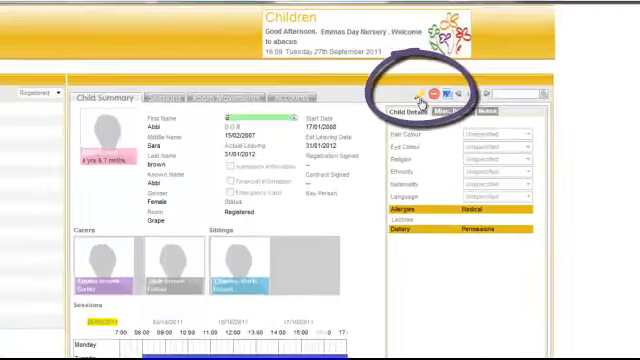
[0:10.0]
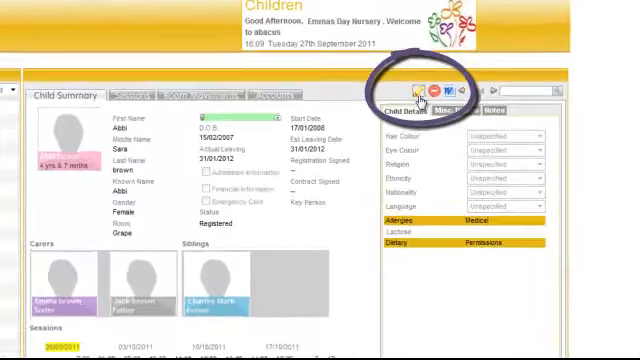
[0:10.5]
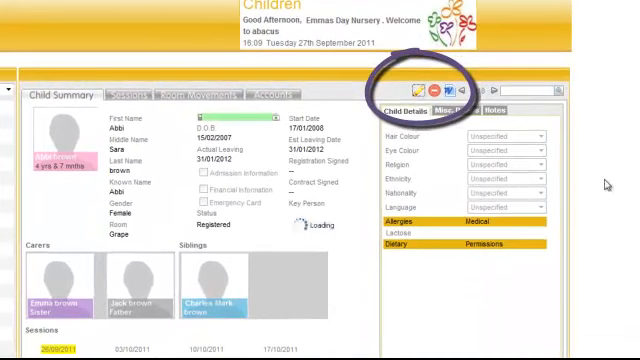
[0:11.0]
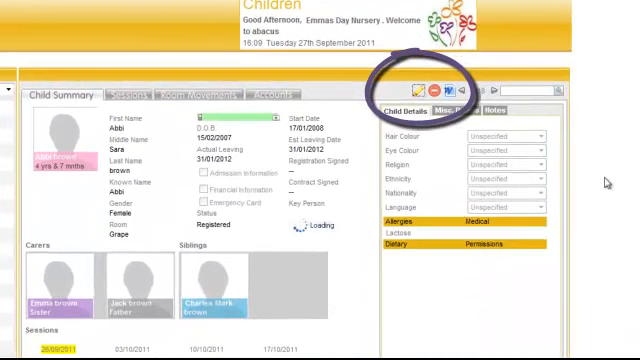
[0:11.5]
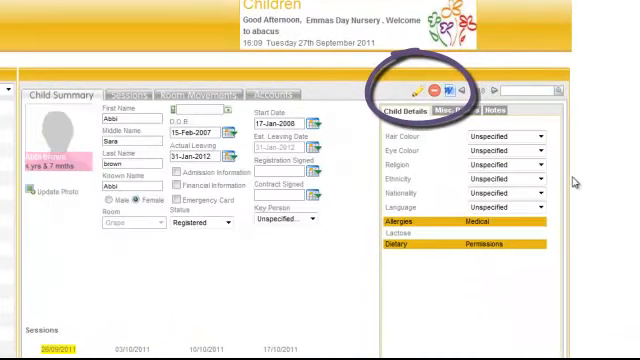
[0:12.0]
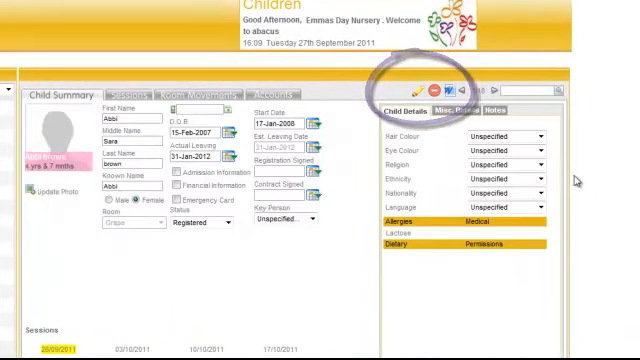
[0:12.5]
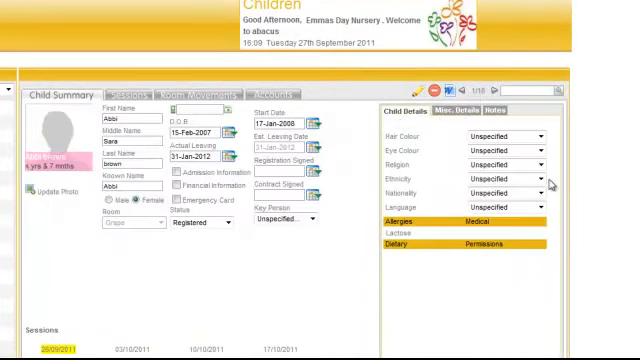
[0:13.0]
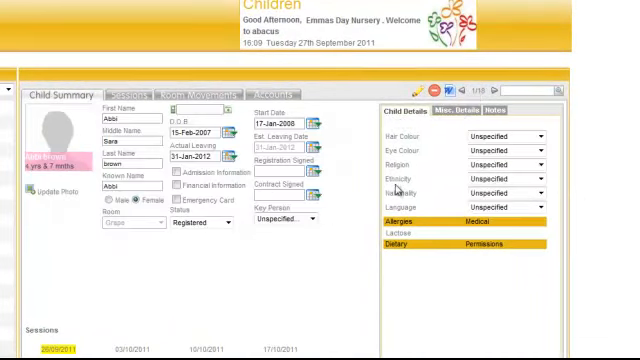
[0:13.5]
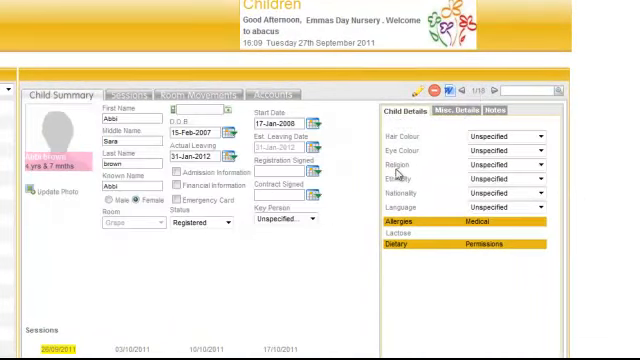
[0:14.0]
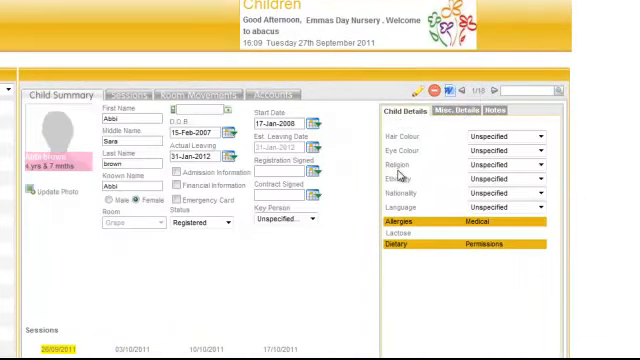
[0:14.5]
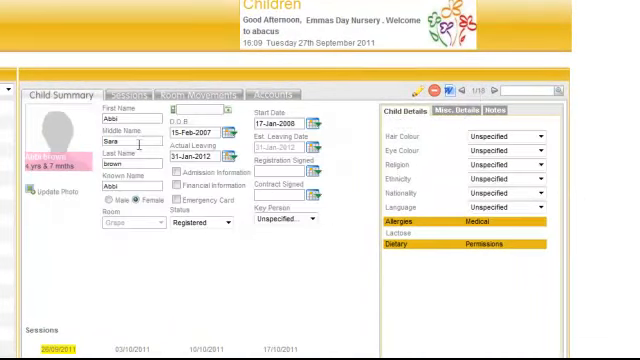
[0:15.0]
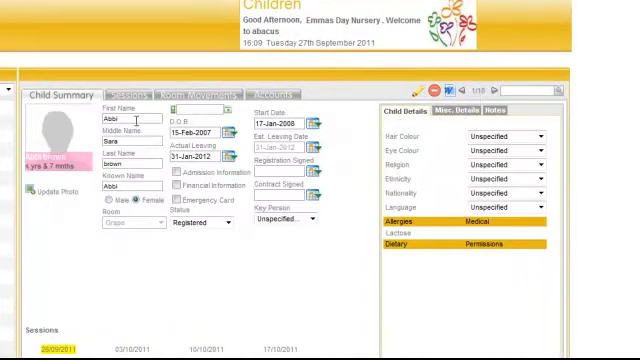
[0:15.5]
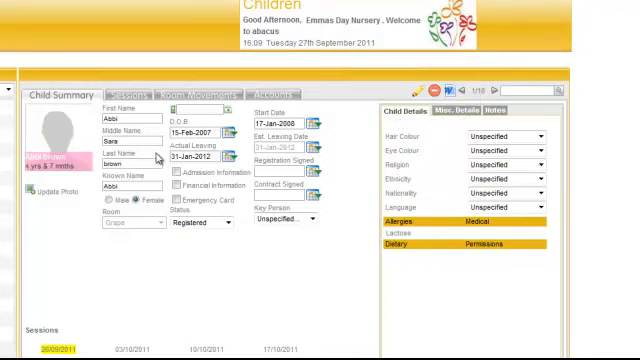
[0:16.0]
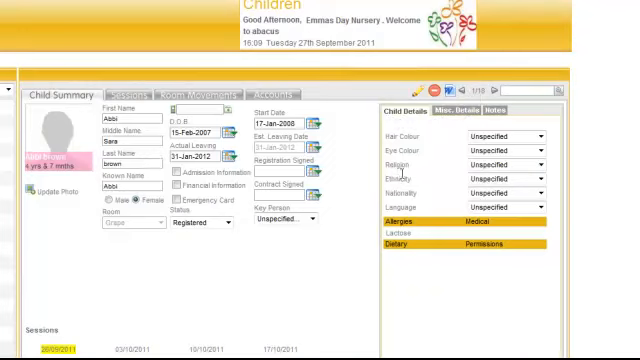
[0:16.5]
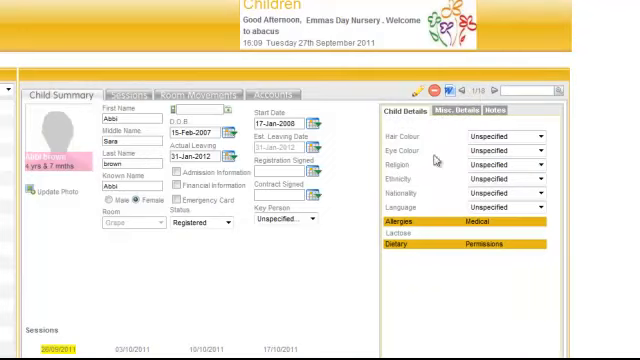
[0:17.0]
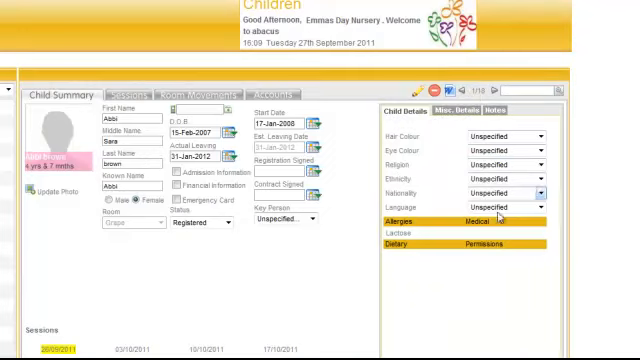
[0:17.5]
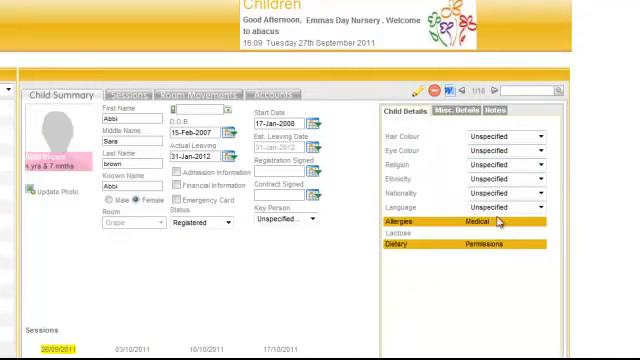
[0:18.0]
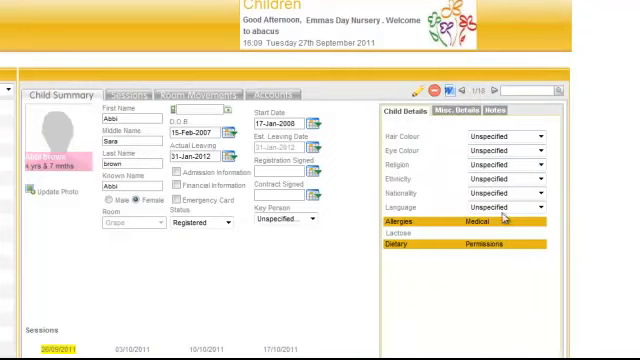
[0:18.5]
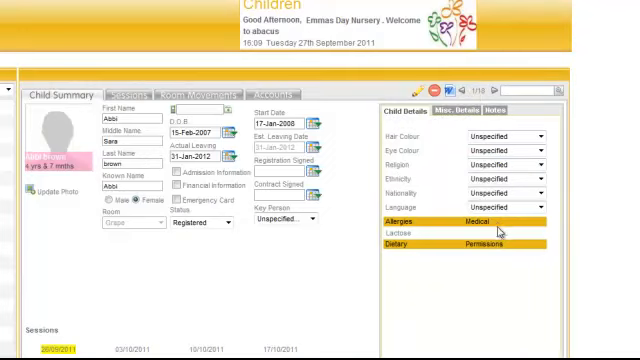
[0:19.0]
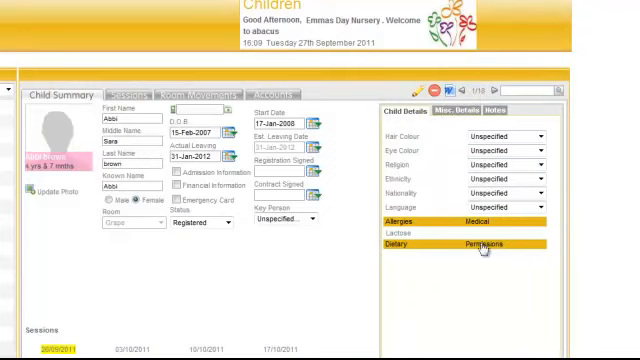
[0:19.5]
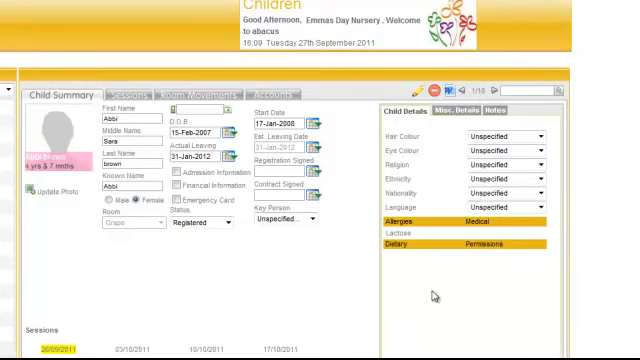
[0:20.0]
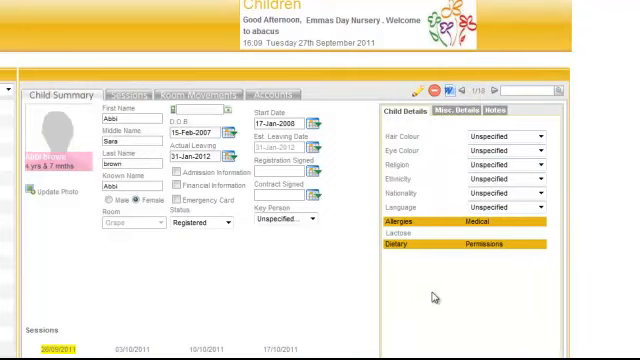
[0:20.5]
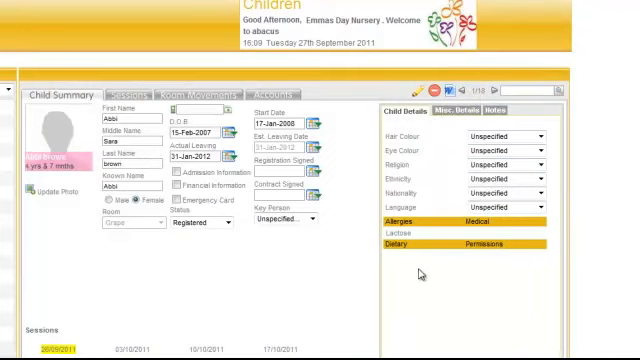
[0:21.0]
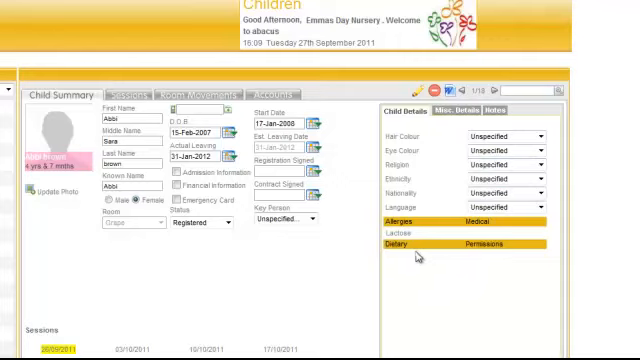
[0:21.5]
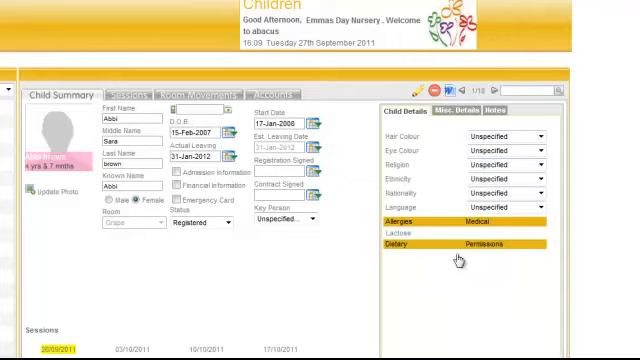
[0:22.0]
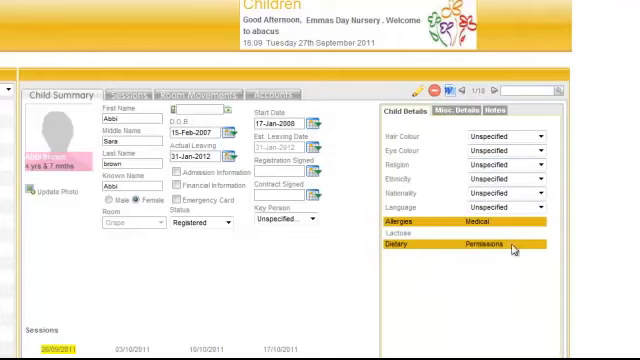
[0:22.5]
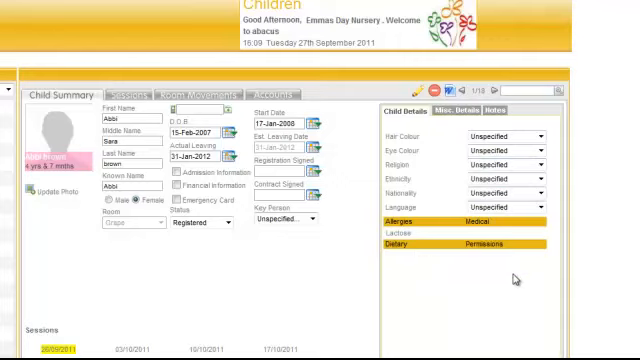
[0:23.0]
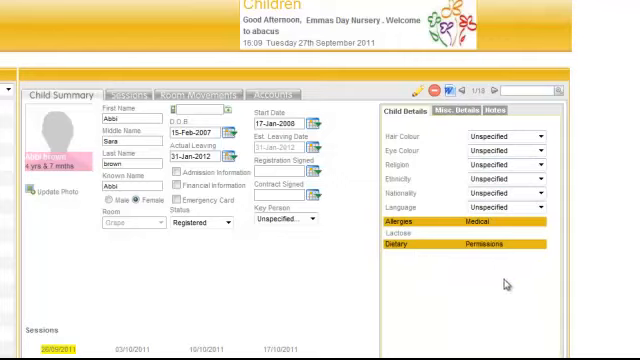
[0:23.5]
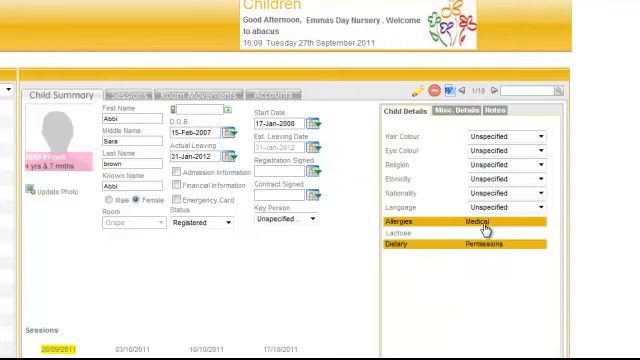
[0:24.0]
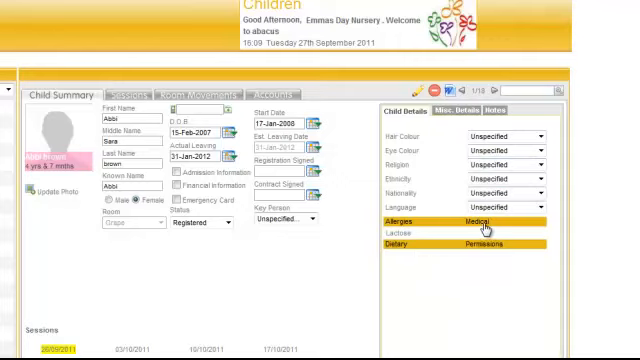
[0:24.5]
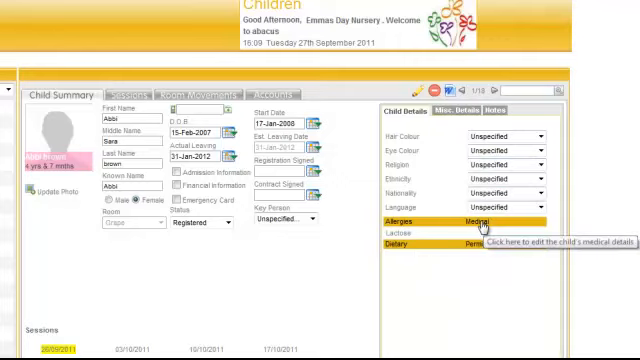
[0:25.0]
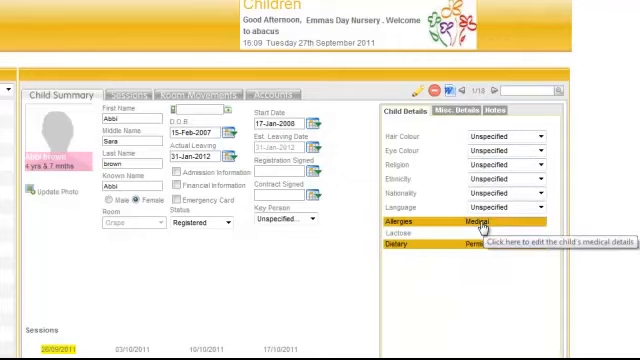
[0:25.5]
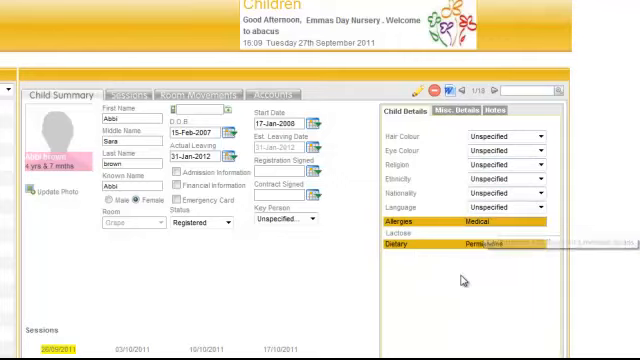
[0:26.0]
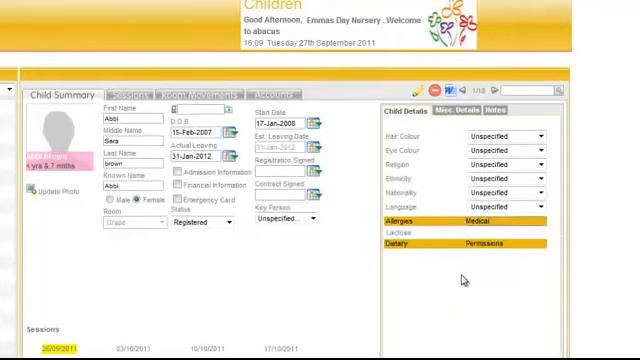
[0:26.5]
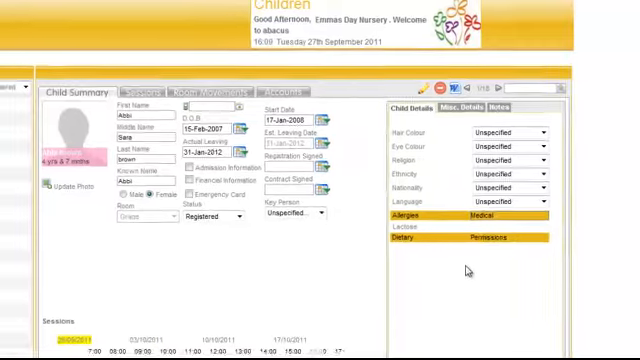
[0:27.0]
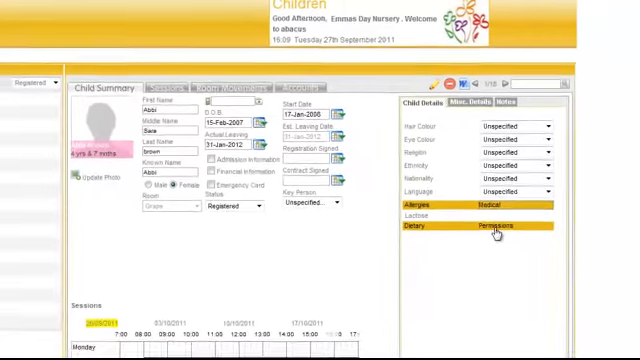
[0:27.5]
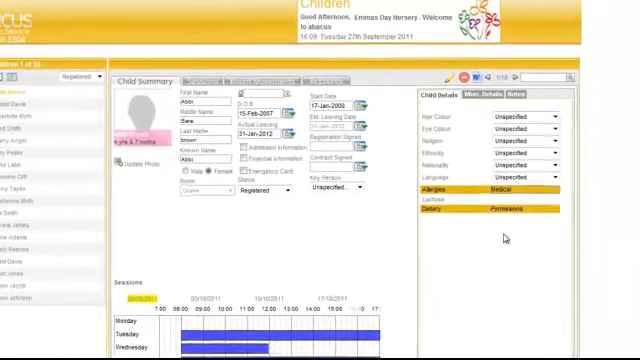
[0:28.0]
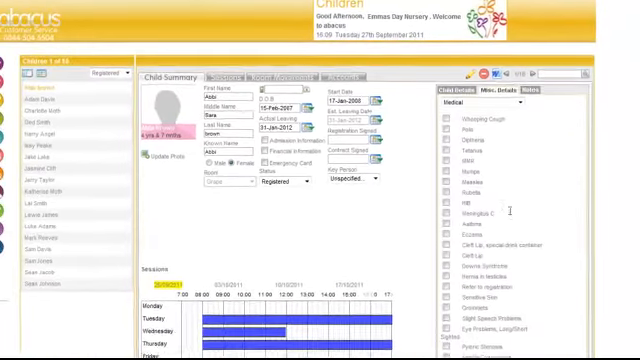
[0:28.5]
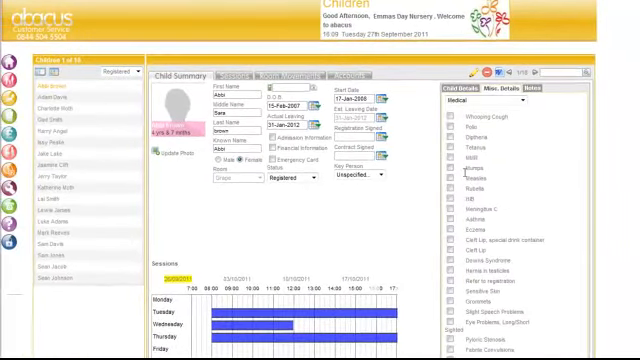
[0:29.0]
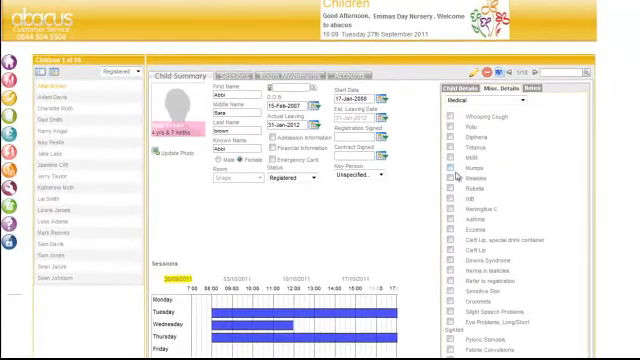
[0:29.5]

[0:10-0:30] The woman leading the tutorial continues working on the site. The page shows the child's name and surname, date of birth, known name, status, key person, start date and an estimated date. She goes into child details and shows its options: hair colour, eye colour, religion, ethnicity, nationality, language, allergies and lactose. Next she goes into another options section, apparently medical details.